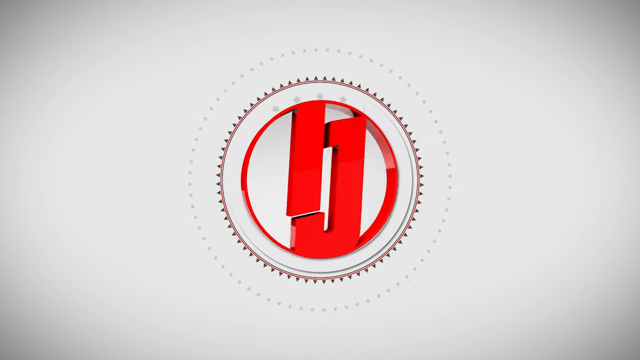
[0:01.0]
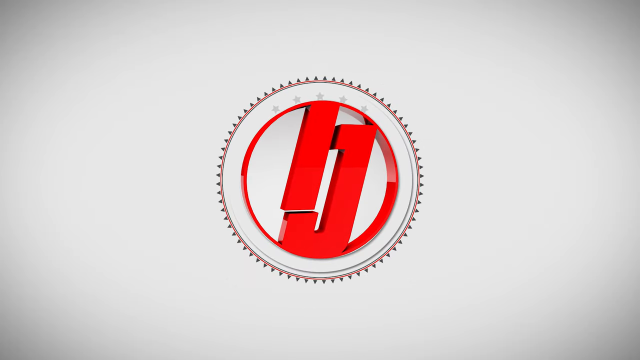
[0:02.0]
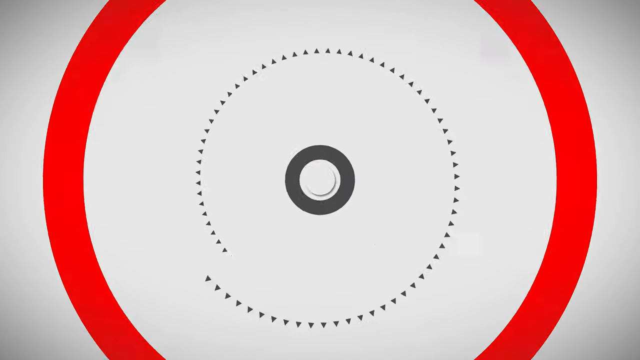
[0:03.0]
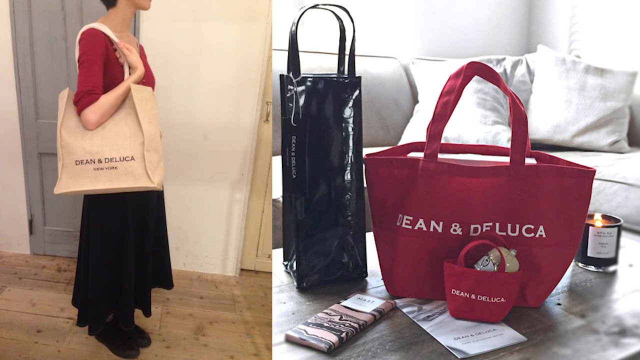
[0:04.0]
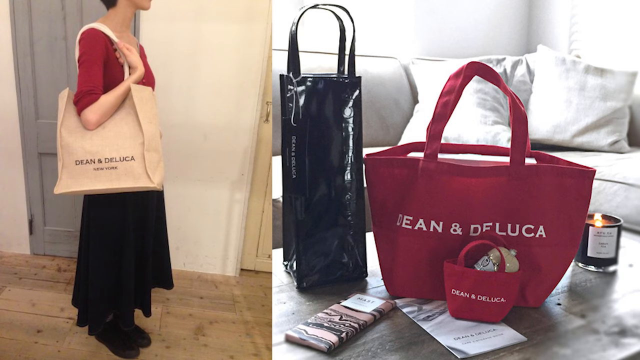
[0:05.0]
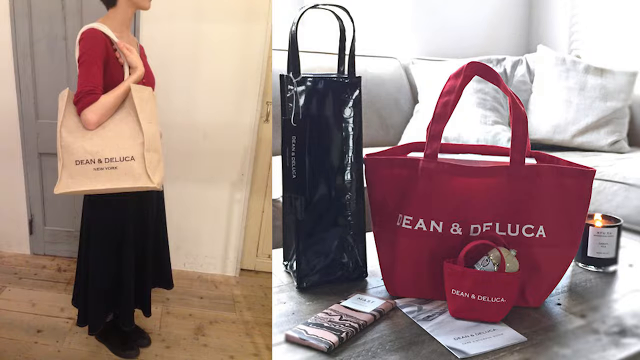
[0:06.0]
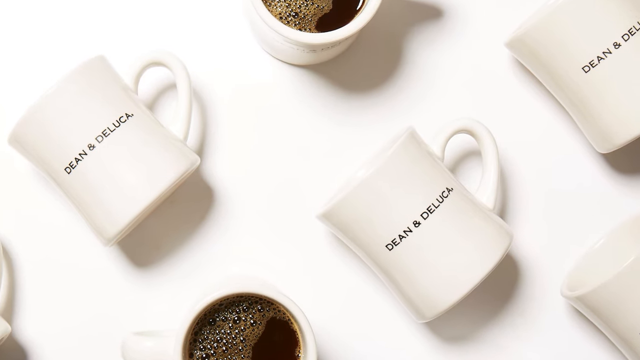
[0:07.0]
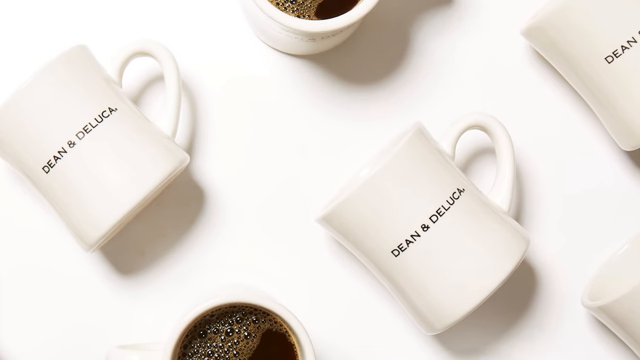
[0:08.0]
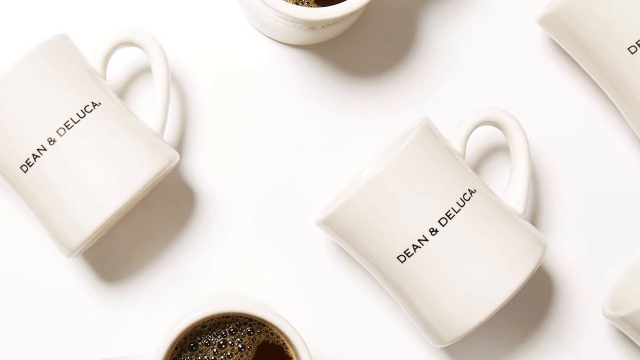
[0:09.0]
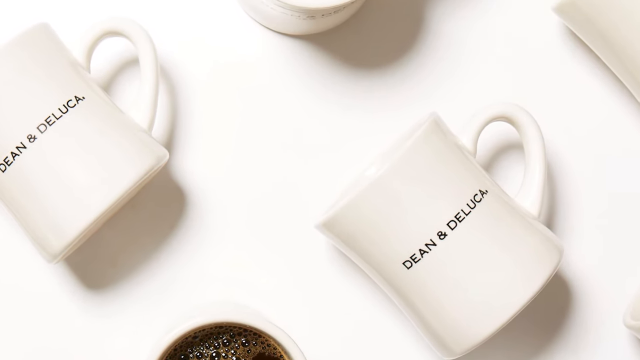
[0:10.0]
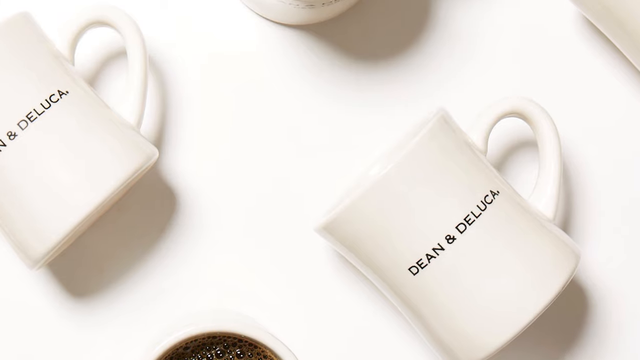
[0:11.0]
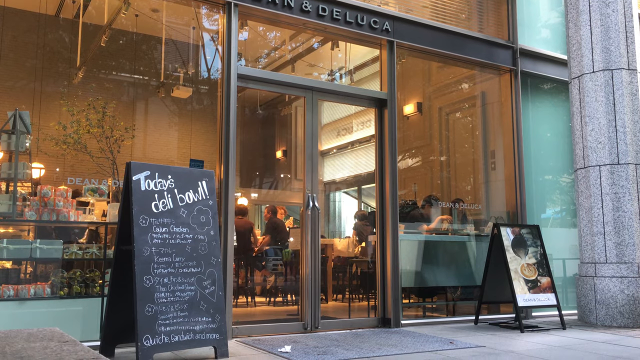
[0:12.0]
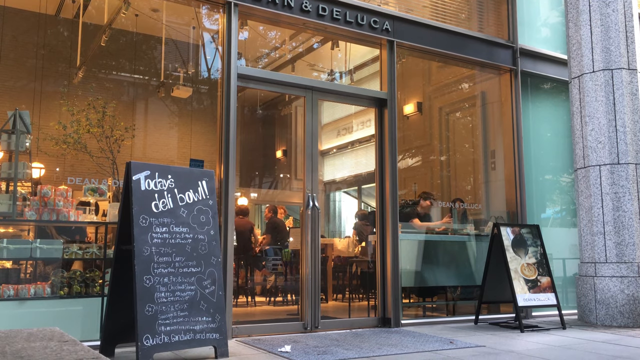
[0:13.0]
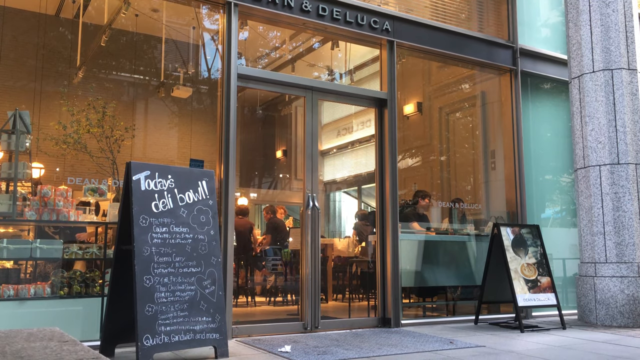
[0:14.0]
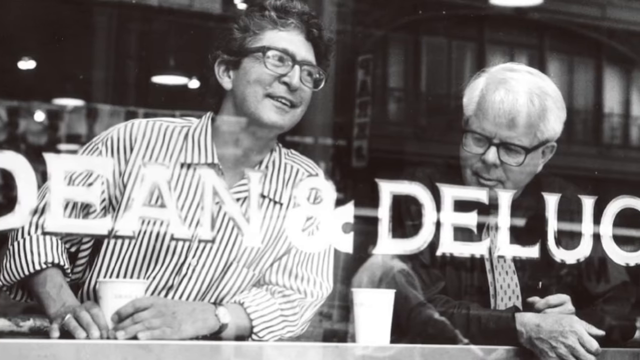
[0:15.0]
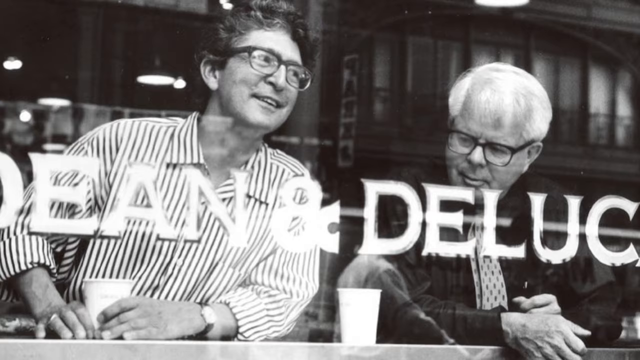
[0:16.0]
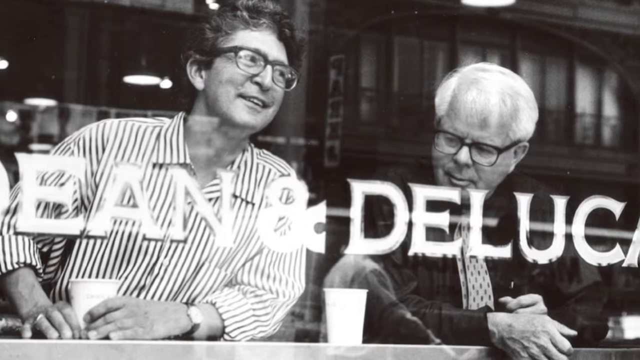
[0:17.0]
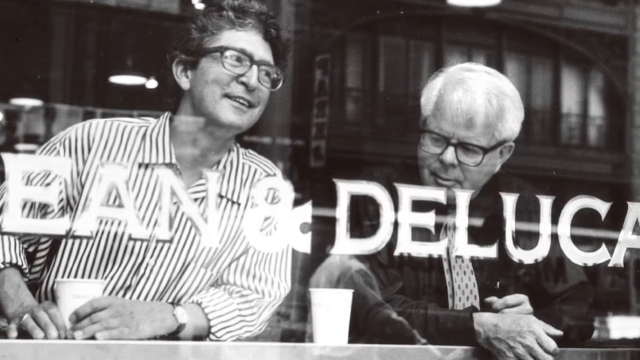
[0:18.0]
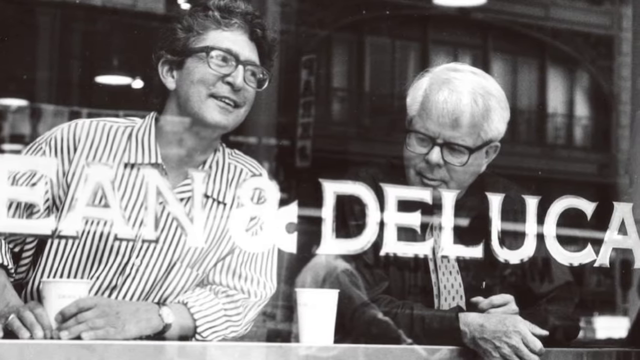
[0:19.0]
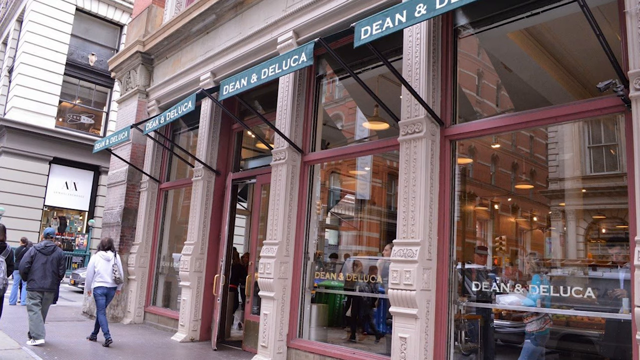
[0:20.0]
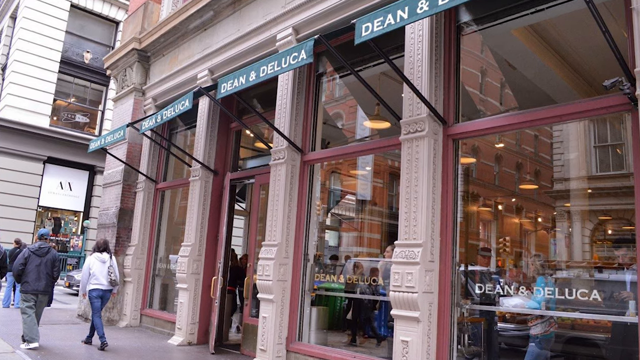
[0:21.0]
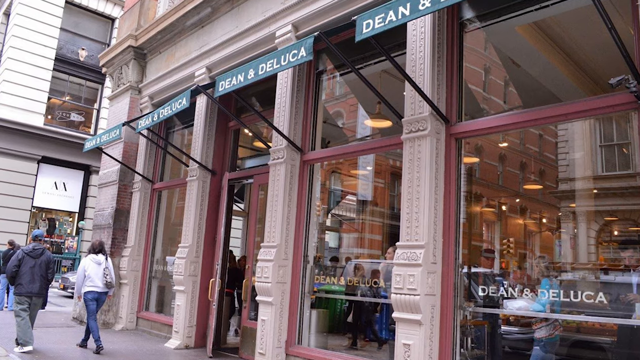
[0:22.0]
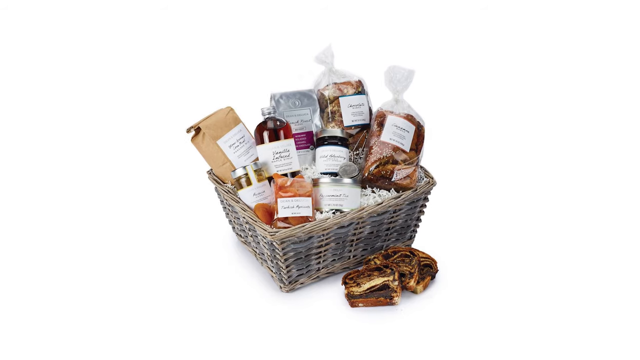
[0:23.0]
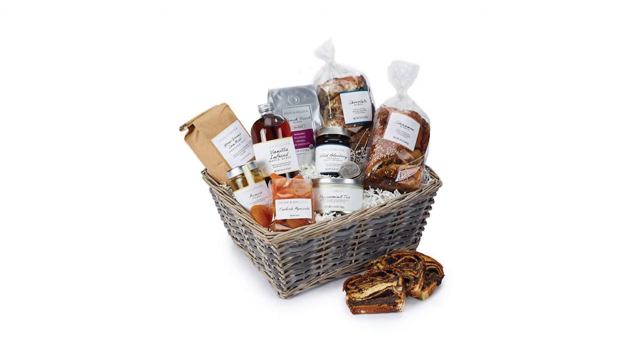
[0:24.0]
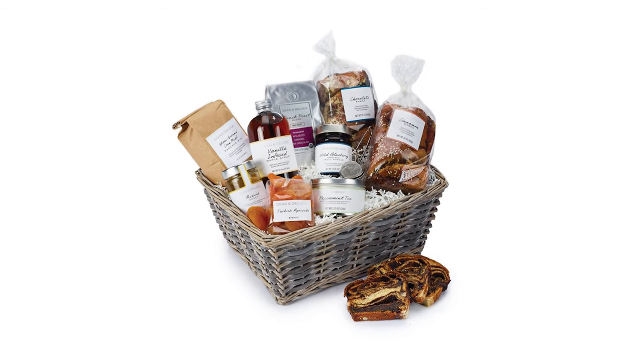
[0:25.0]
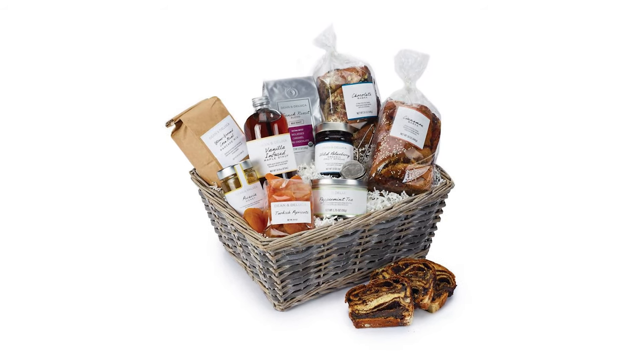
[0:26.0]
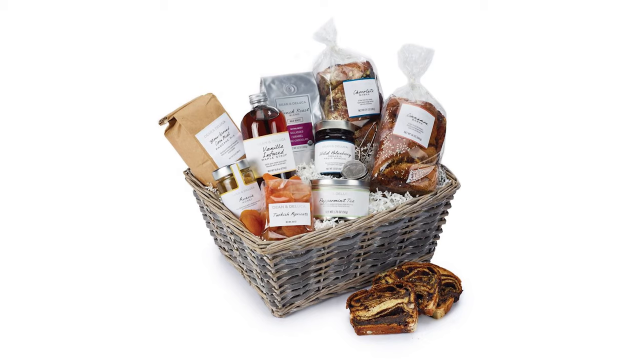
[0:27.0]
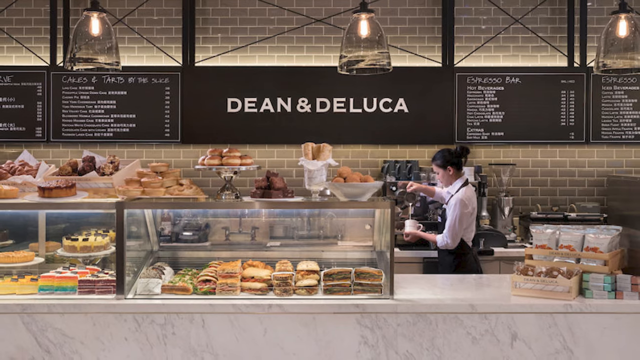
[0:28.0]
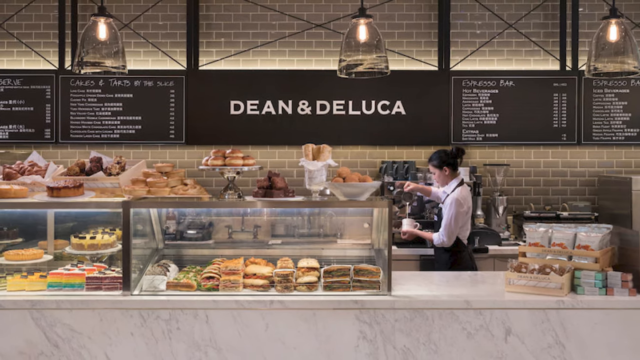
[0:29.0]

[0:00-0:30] The video opens with an animation of the logo, then photos appear next to one another. The Dean and DeLuca brand is shown with its handbags in two photos. Branded Dean and DeLuca mugs follow as the view zooms in on the mugs and a photo of them. Next comes the outside of a restaurant that appears to be a Dean and DeLuca, followed by people inside the restaurant eating and dining. An old black-and-white photo shows a window with two people in it, with "Dean and DeLuca" reading down the window. Another photo shows the outside of a Dean and DeLuca restaurant and its windows. A further photo shows a basket that appears to hold Dean and DeLuca products, including what look like extracts and vanilla flavoring. Then the inside of a Dean and DeLuca restaurant appears, showing the register and the countertop with glass cases holding all kinds of bread, bakery sweets and pies, with many other breads on top. Whiteboards in the background list prices and items.